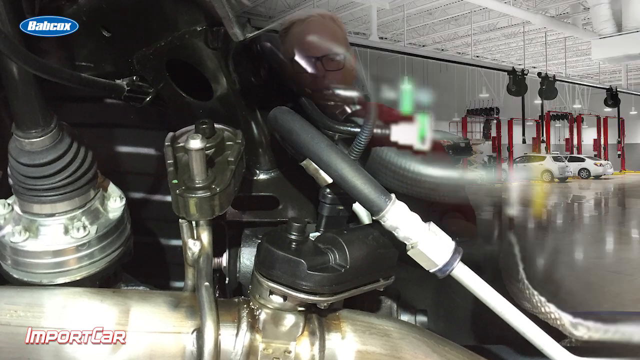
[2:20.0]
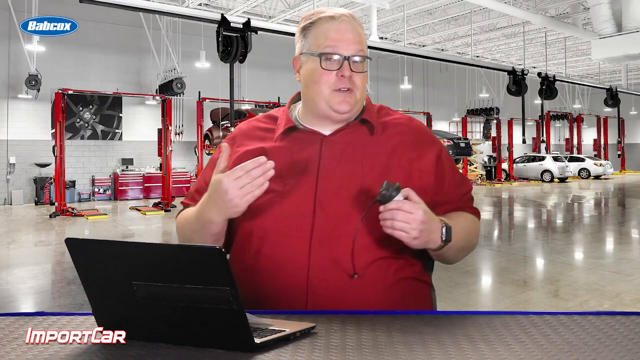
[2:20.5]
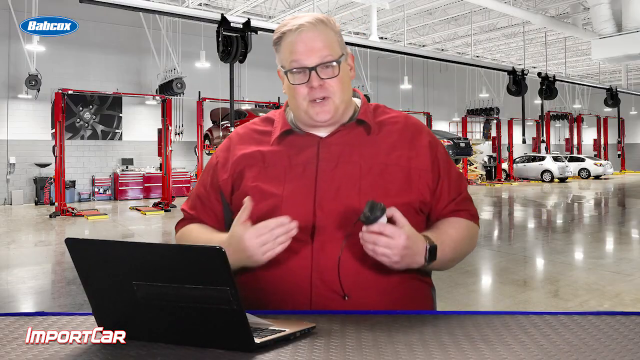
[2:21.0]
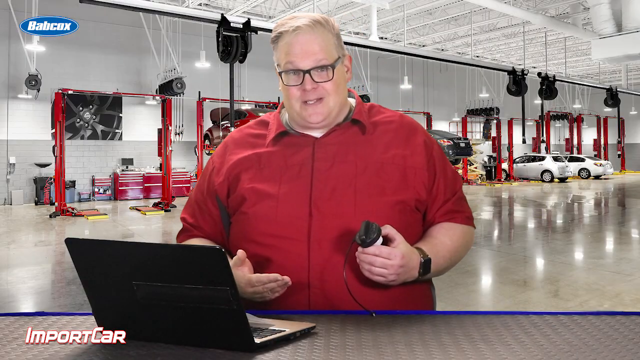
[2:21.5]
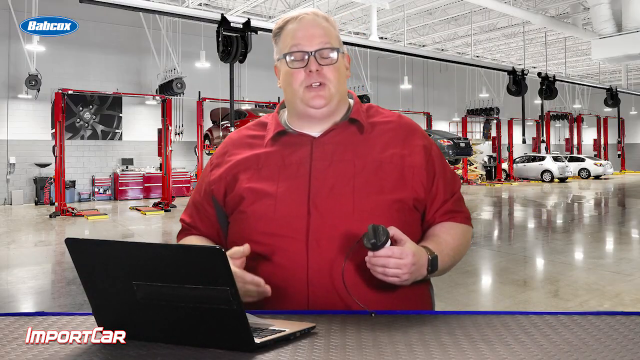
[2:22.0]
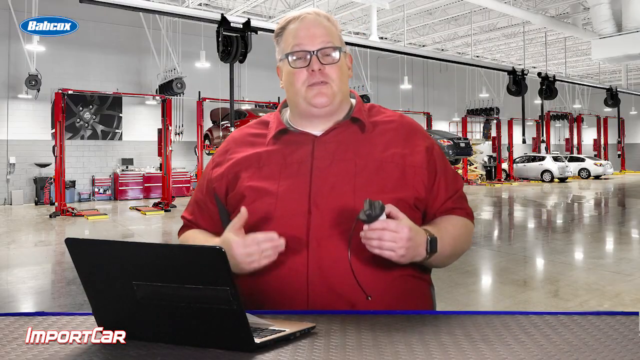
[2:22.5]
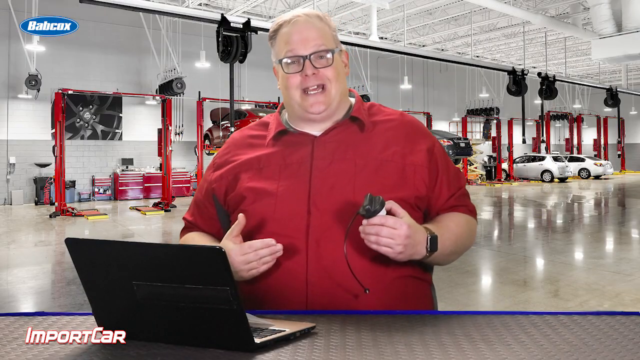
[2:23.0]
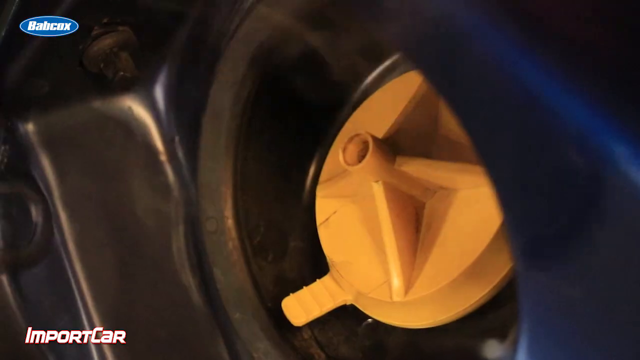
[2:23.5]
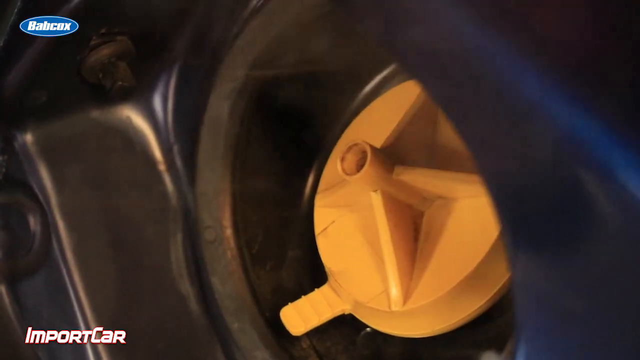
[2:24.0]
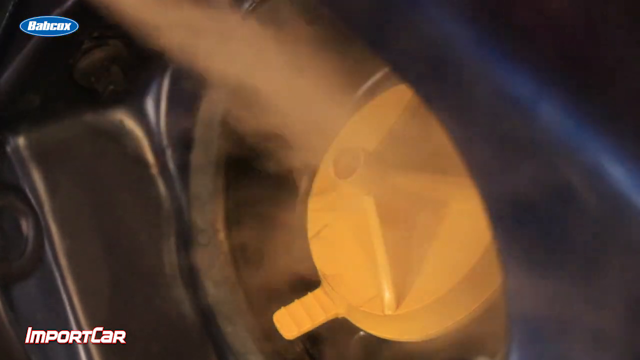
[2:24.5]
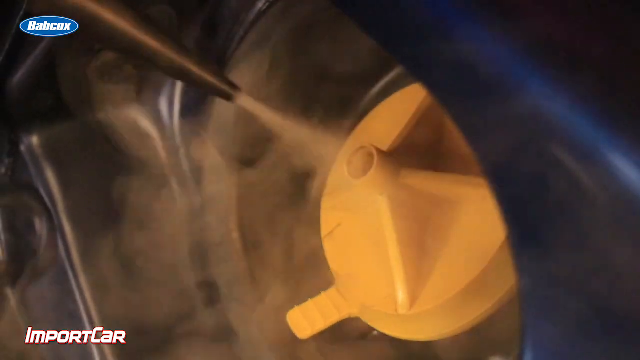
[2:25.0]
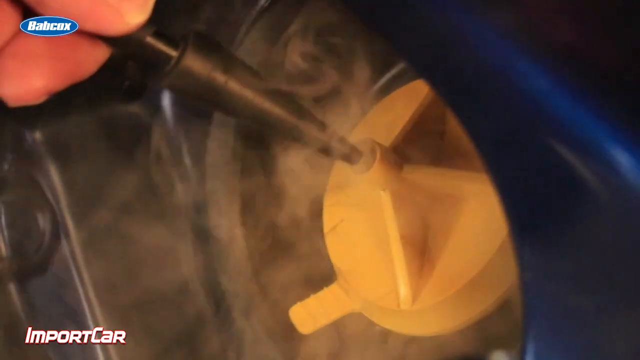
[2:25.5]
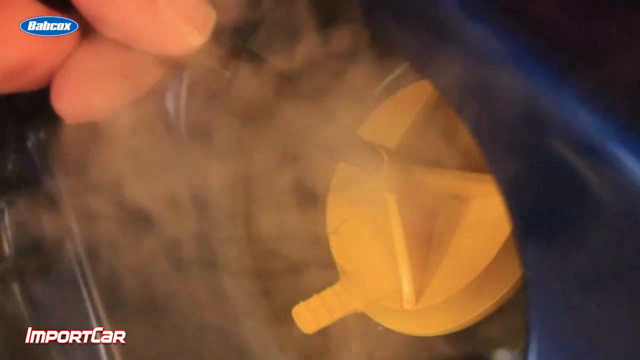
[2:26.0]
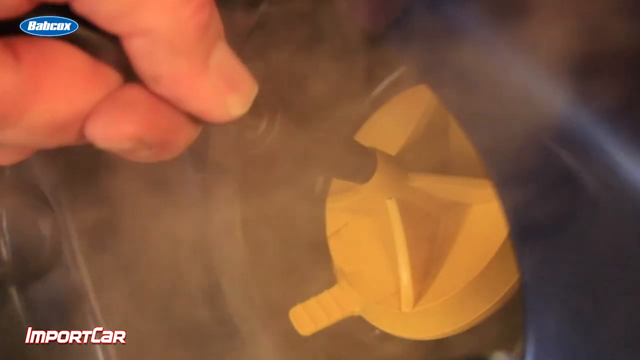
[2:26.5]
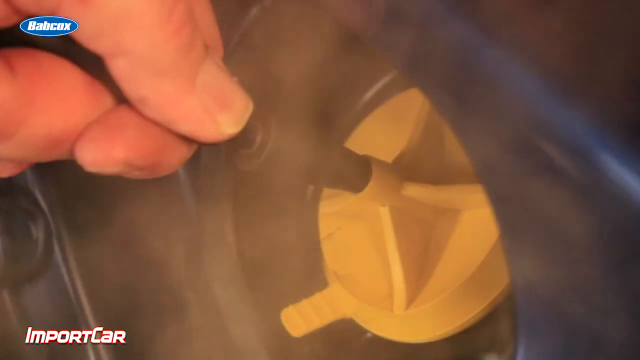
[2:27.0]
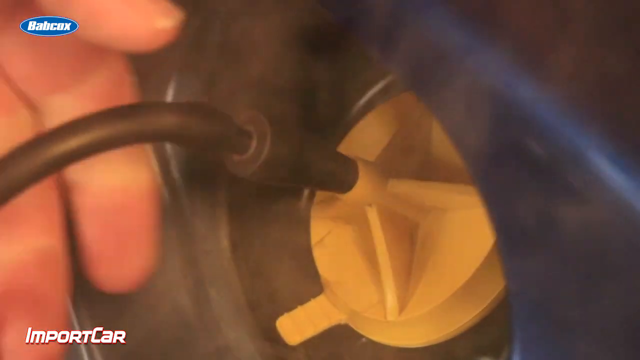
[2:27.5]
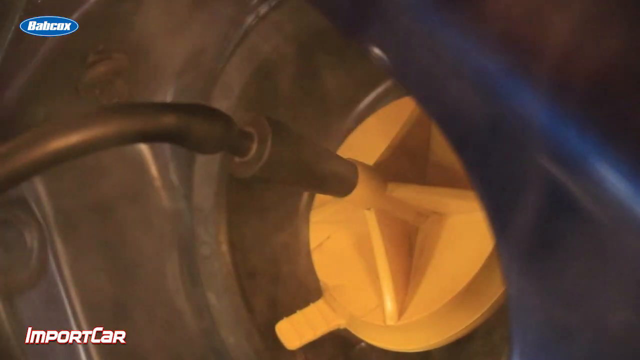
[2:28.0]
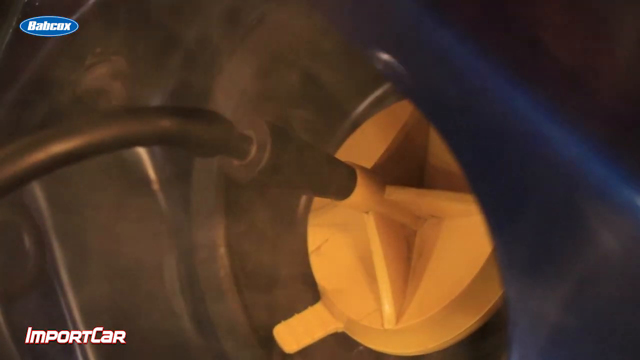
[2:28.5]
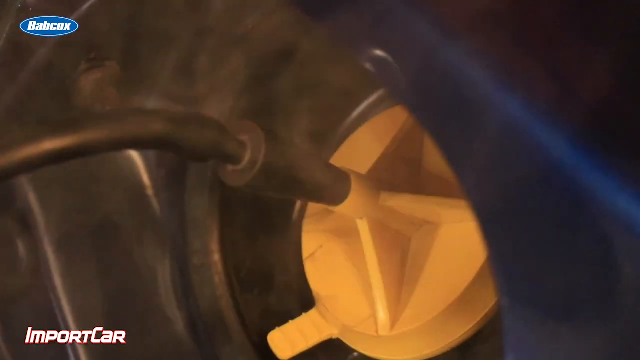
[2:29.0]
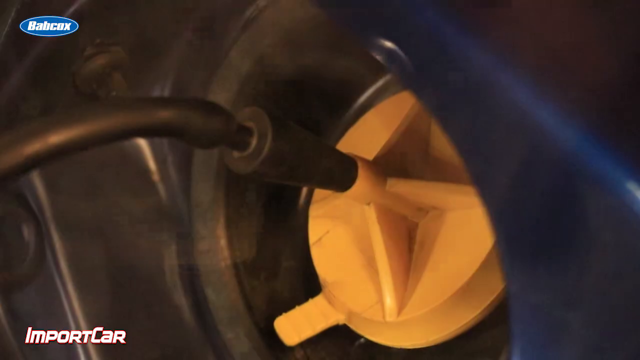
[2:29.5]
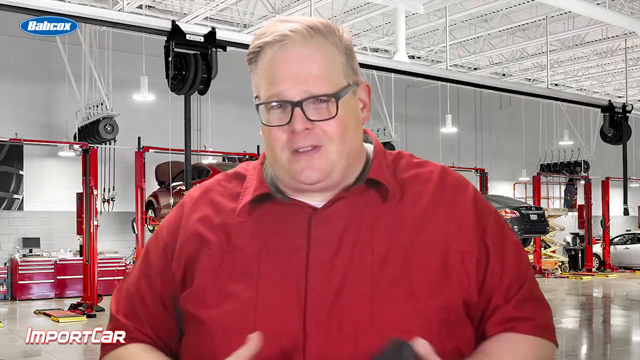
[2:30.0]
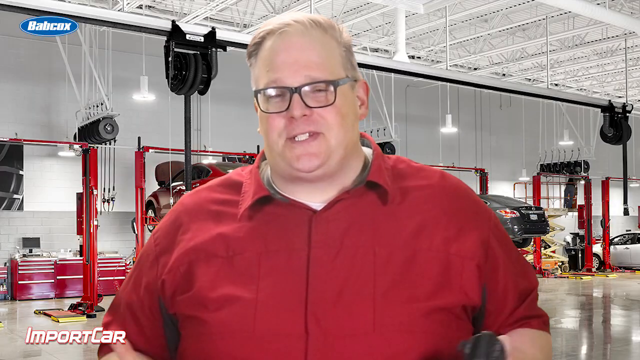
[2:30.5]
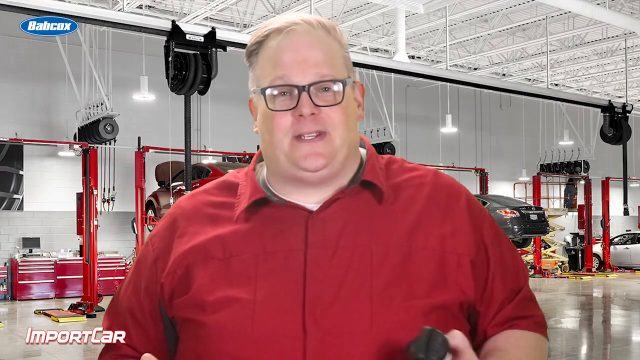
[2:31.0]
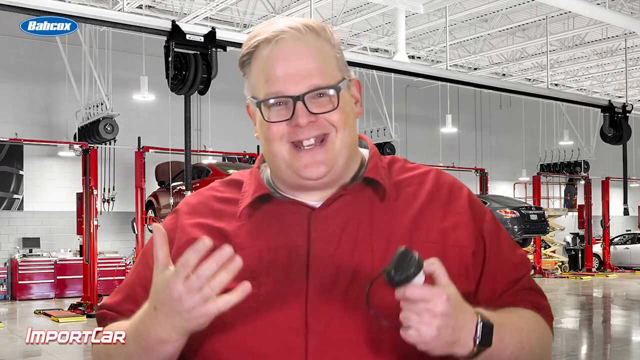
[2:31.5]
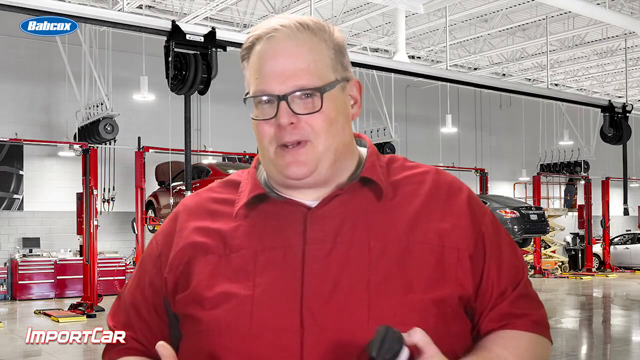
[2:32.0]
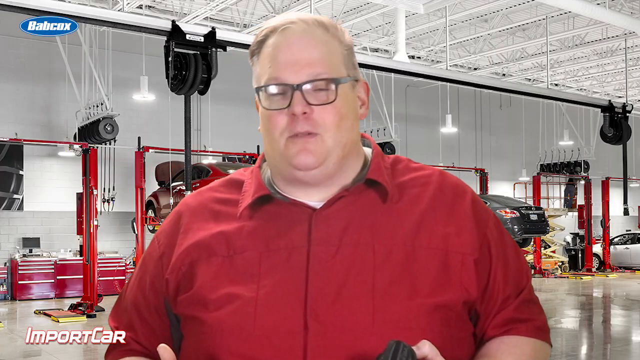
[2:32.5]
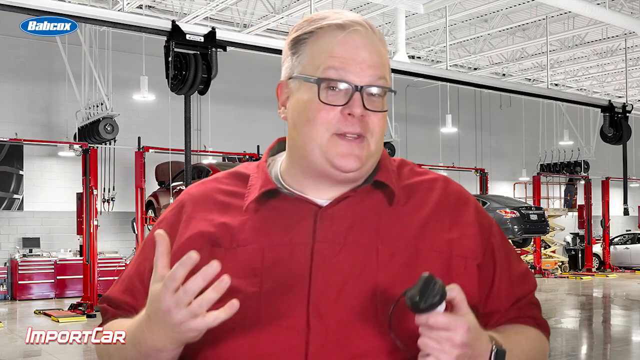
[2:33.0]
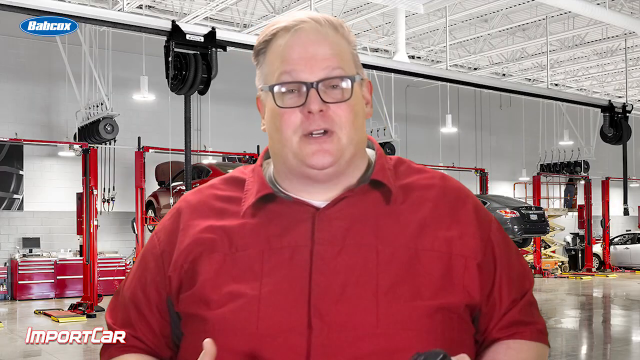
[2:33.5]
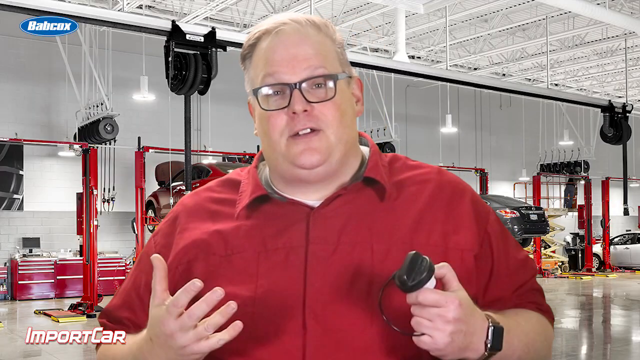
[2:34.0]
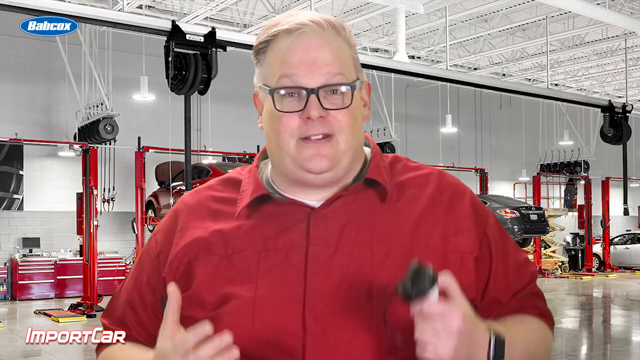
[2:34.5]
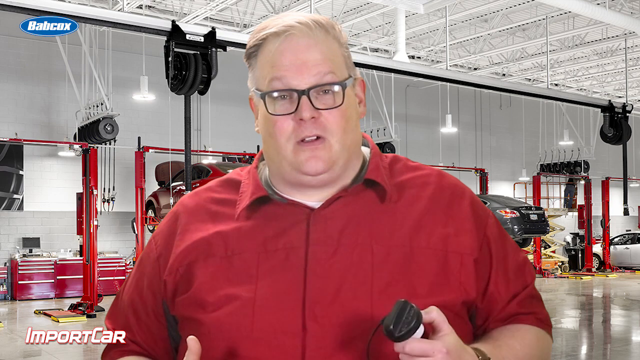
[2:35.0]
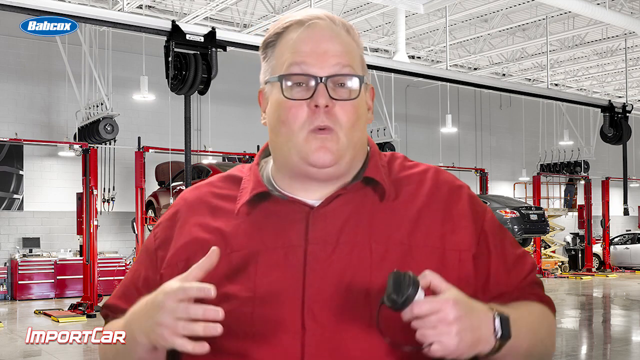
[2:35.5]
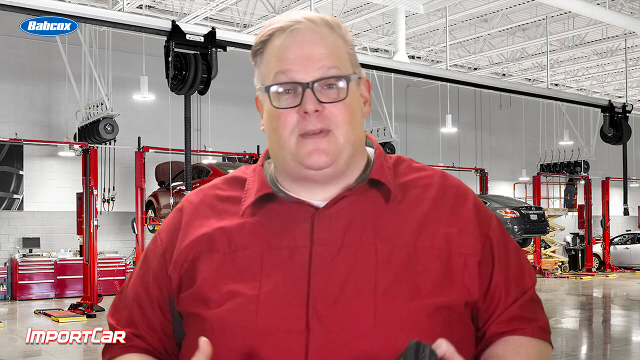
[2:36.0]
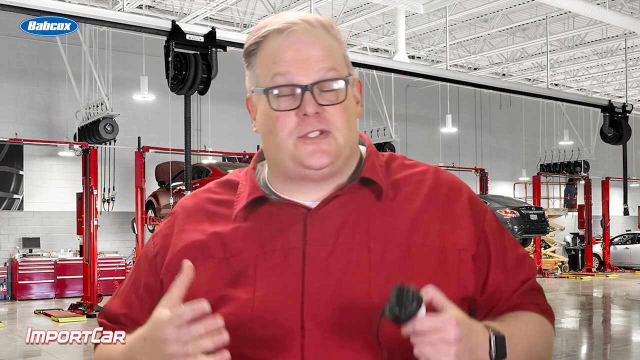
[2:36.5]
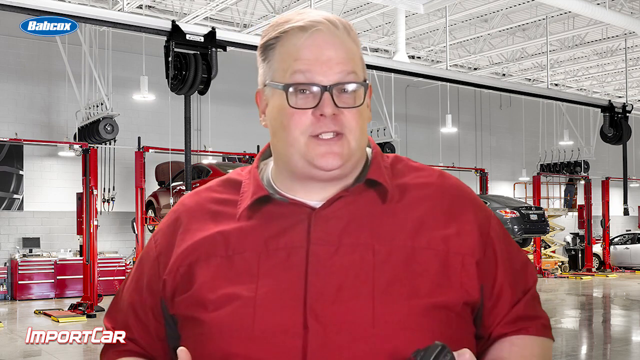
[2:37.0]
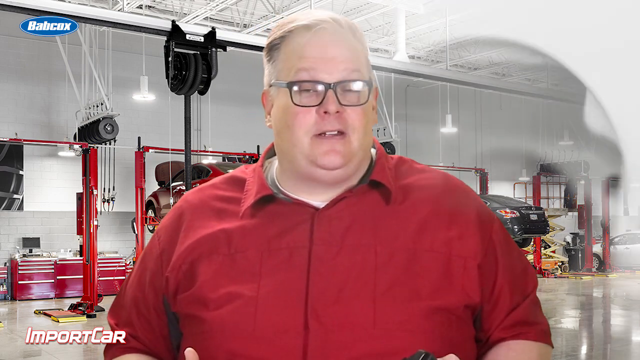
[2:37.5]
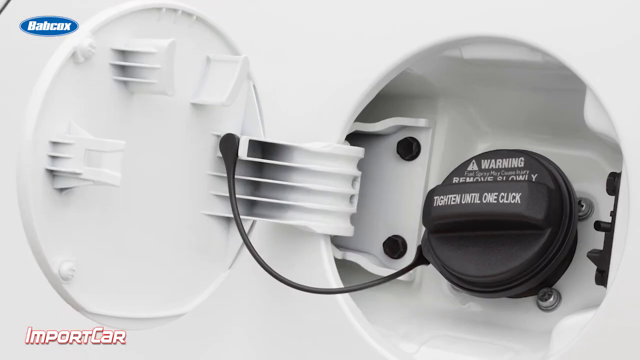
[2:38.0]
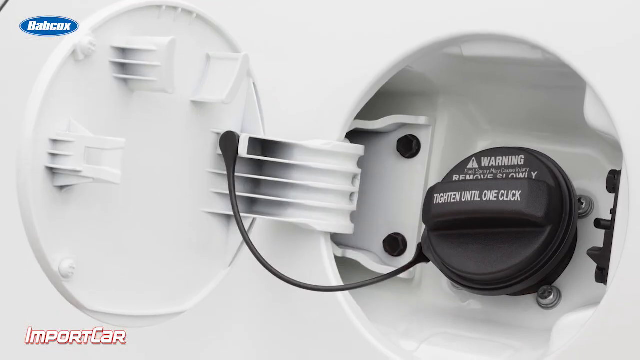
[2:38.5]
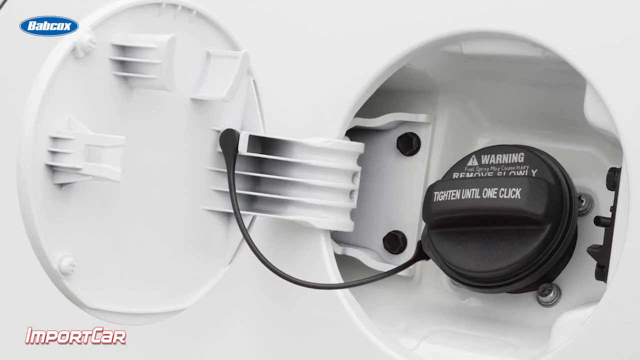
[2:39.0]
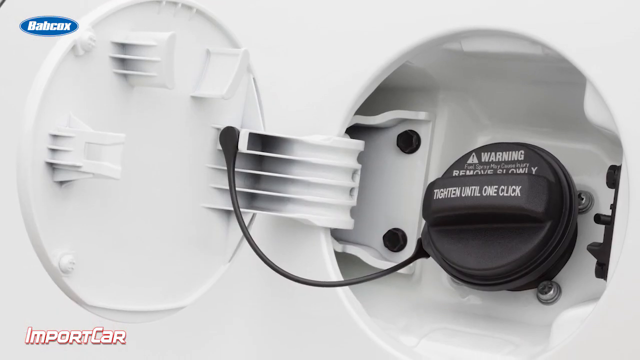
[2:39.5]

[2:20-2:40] The engine, hoses and parts are shown. Then the tall, large white man stands in the garage holding a gas cap. A demonstration shows some sort of nozzle going into an orange cap. He continues talking, waving his arms. He stands in the garage wearing his red shirt, glasses and blonde hair, talking and smiling.